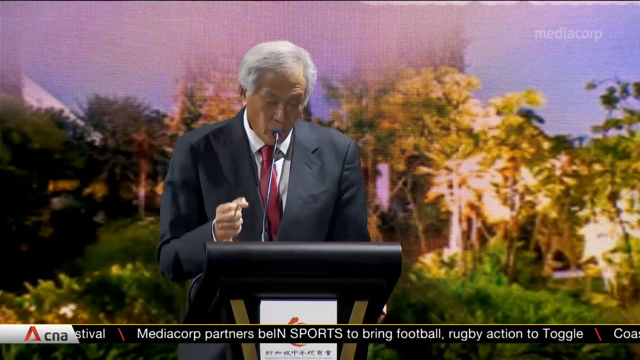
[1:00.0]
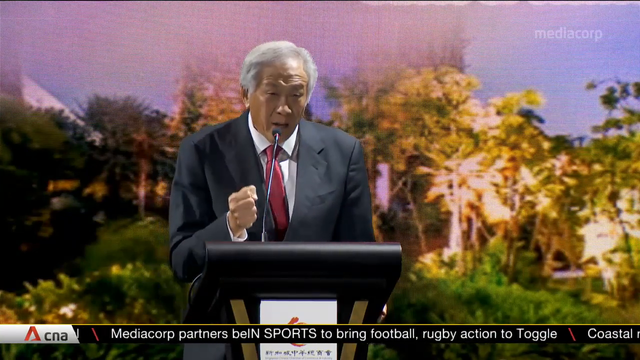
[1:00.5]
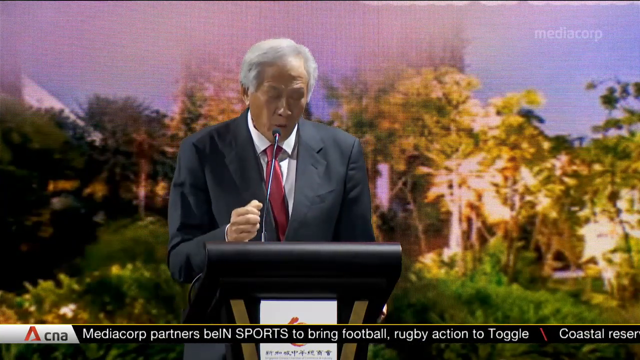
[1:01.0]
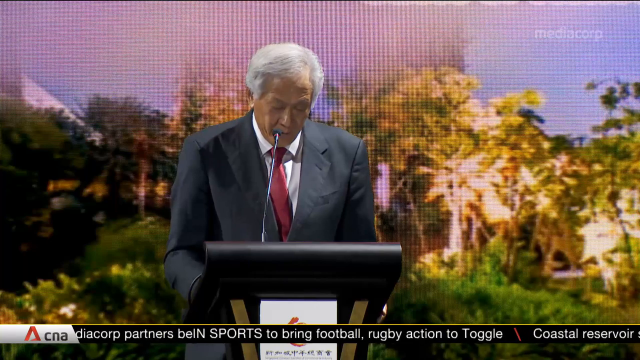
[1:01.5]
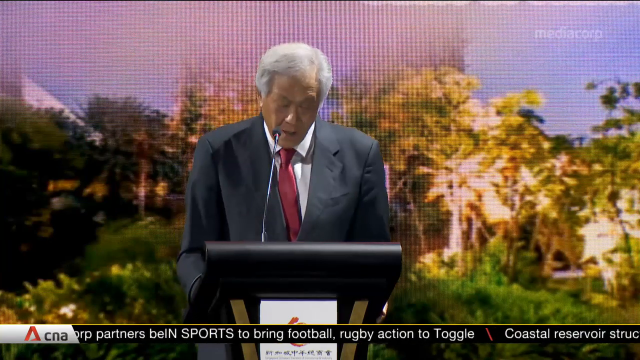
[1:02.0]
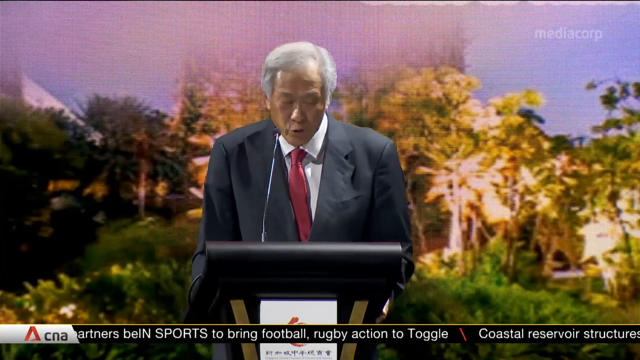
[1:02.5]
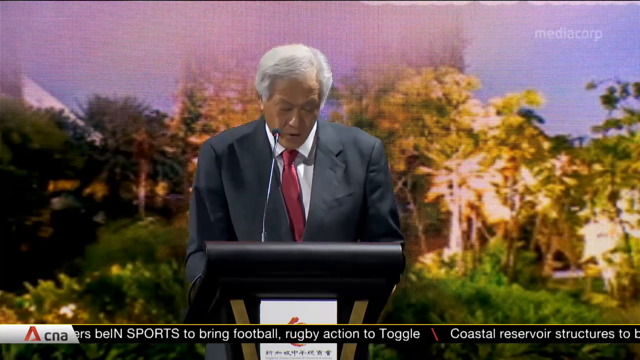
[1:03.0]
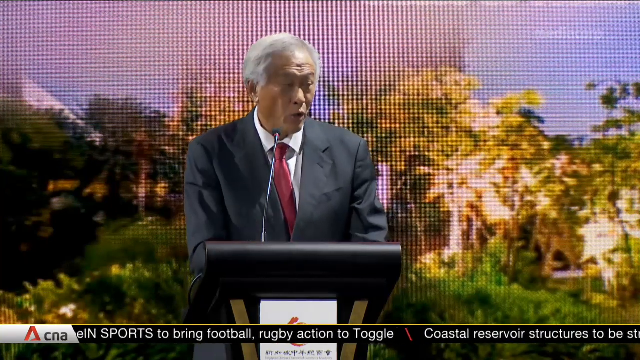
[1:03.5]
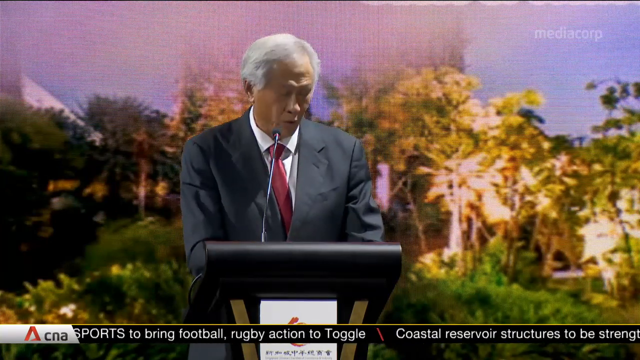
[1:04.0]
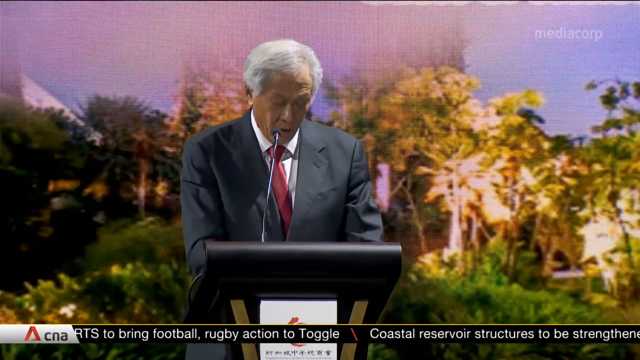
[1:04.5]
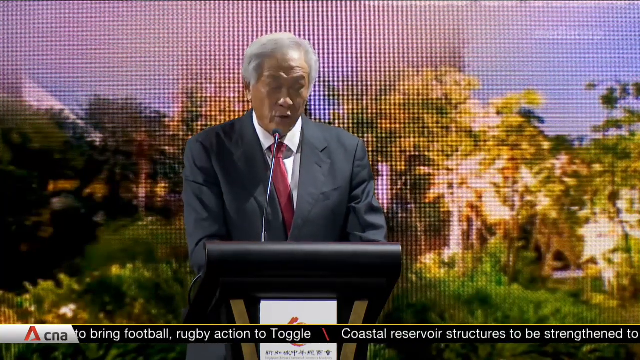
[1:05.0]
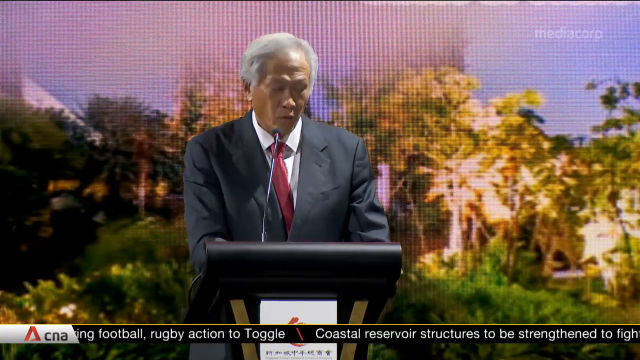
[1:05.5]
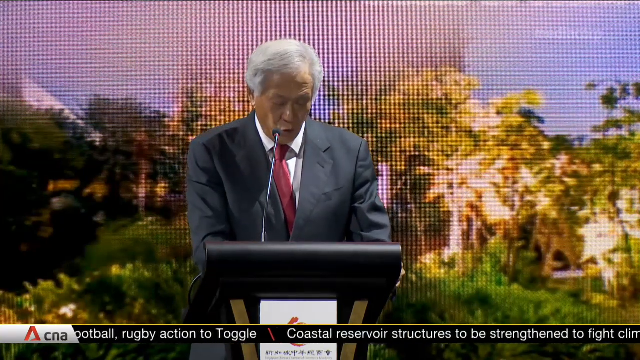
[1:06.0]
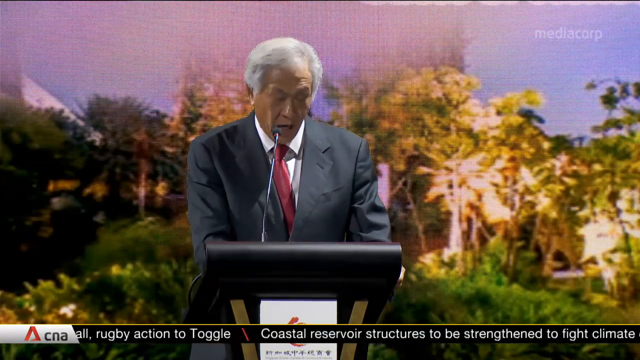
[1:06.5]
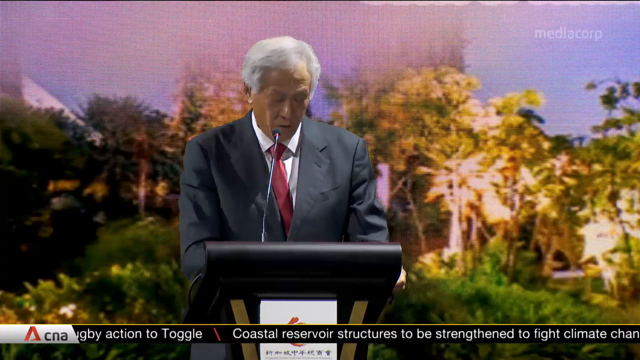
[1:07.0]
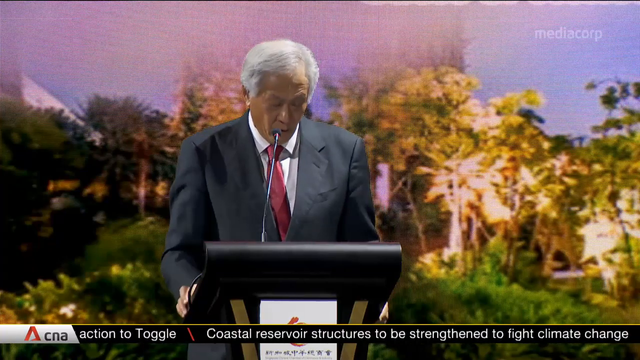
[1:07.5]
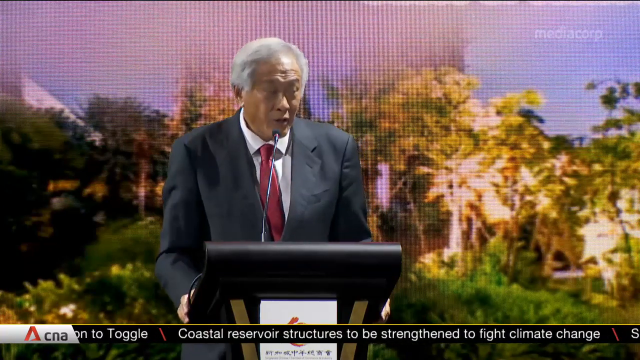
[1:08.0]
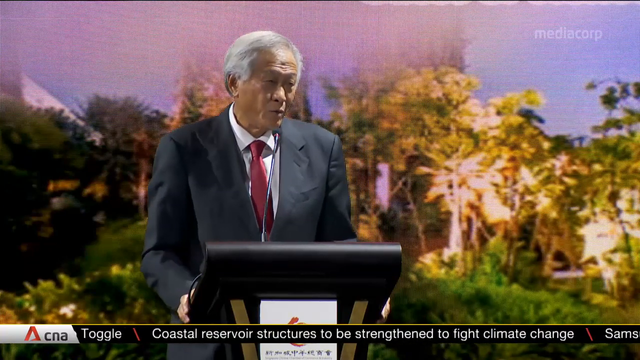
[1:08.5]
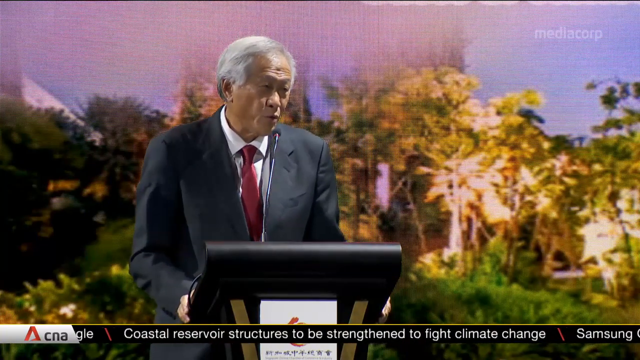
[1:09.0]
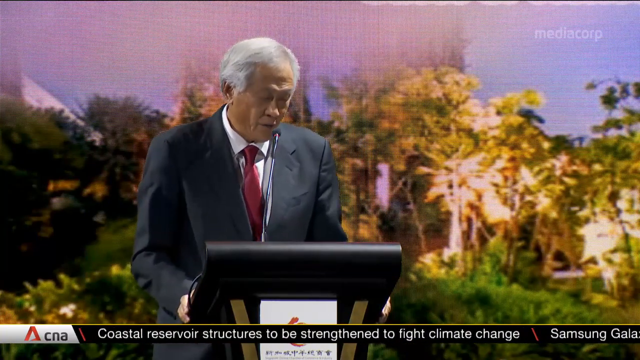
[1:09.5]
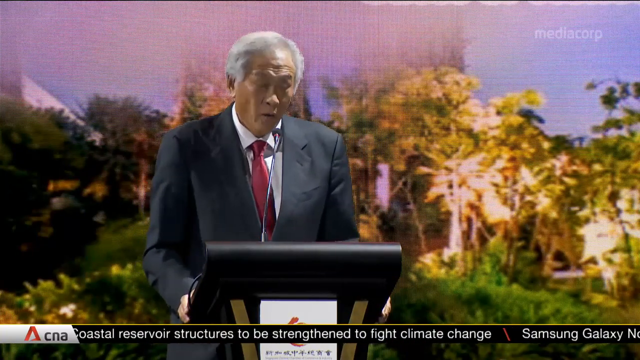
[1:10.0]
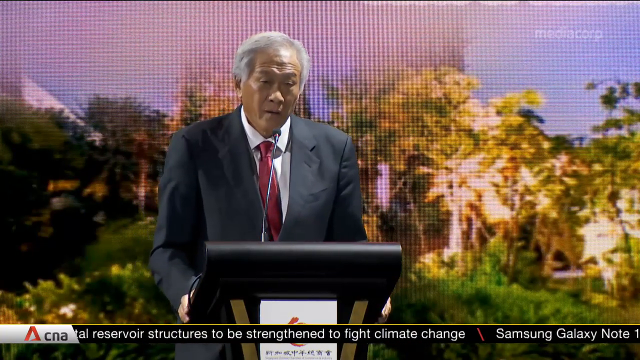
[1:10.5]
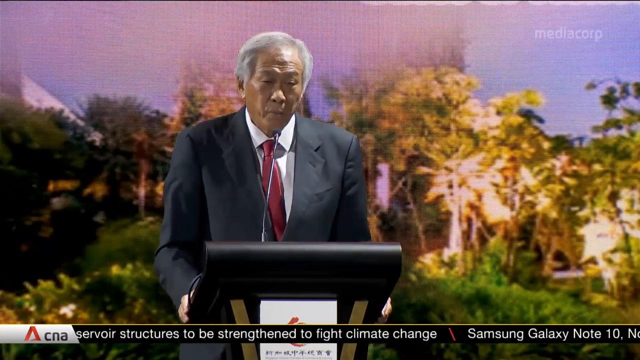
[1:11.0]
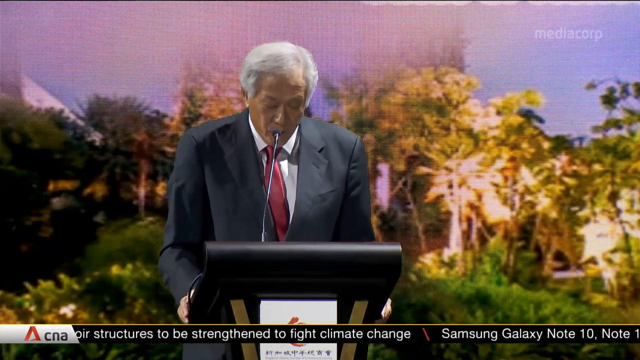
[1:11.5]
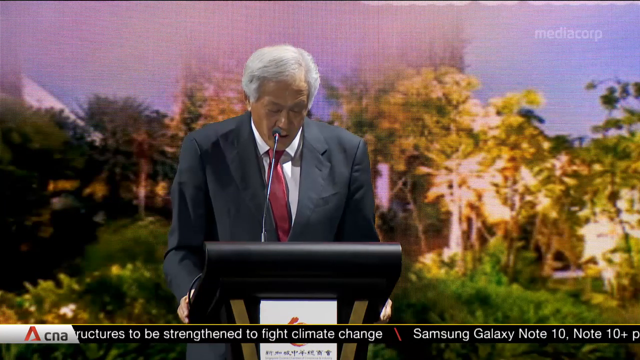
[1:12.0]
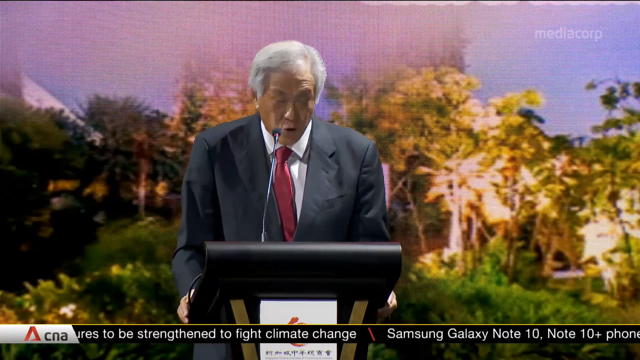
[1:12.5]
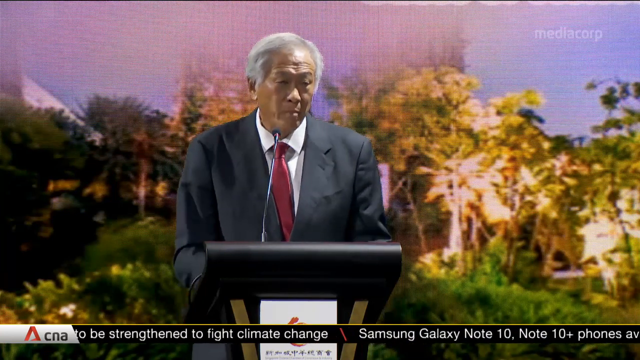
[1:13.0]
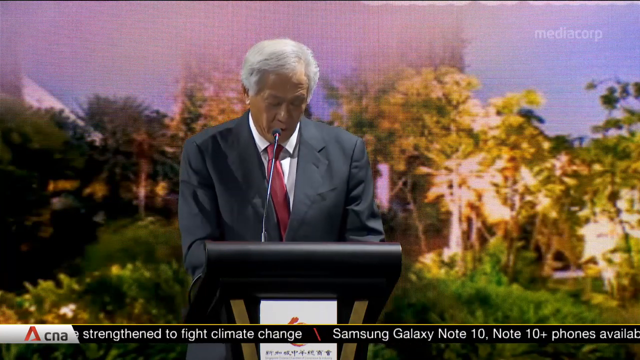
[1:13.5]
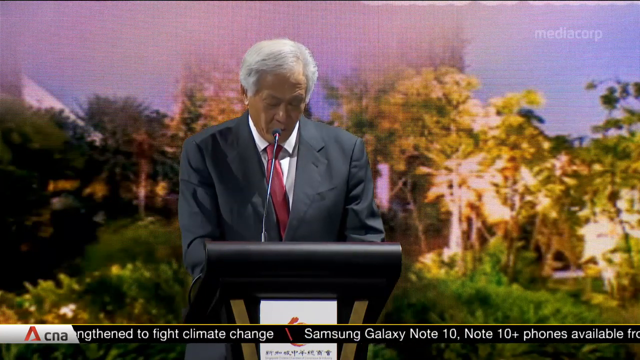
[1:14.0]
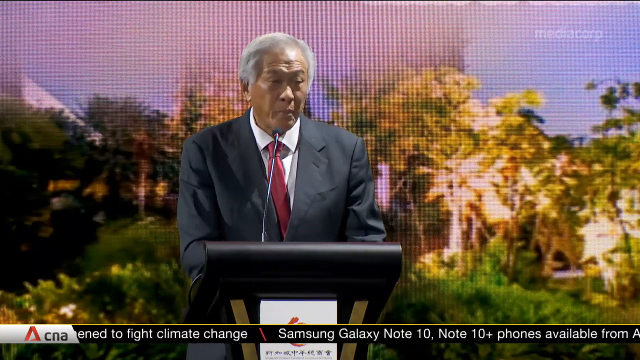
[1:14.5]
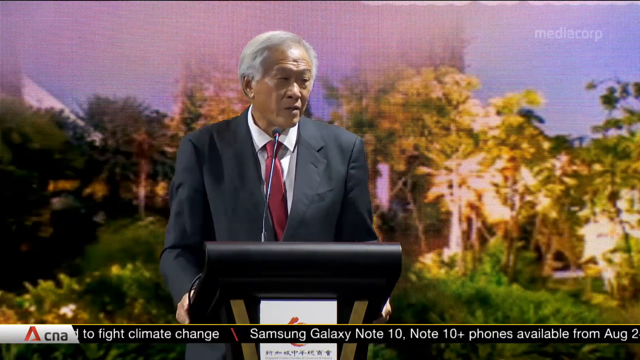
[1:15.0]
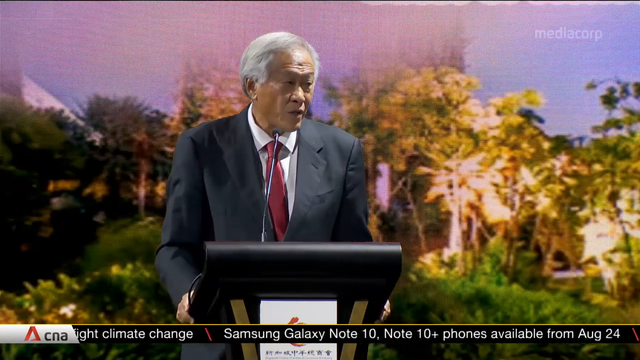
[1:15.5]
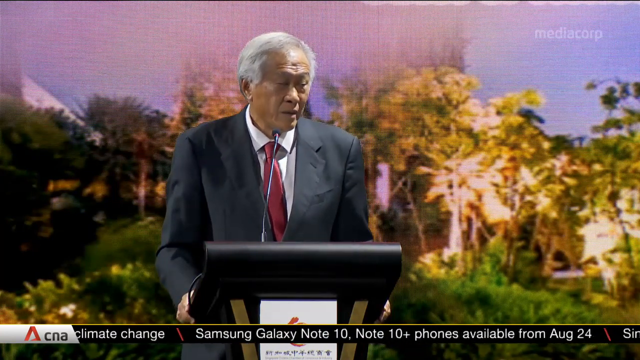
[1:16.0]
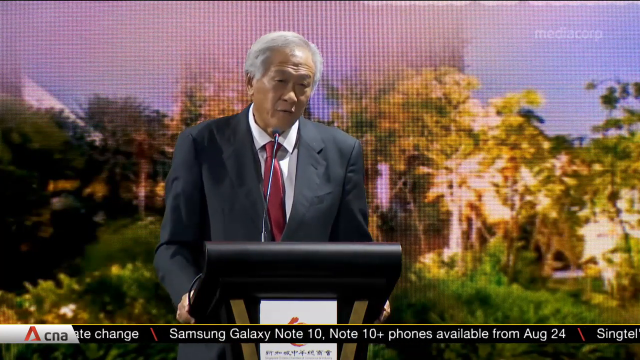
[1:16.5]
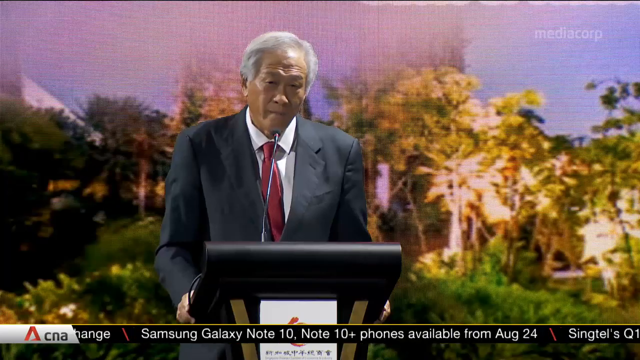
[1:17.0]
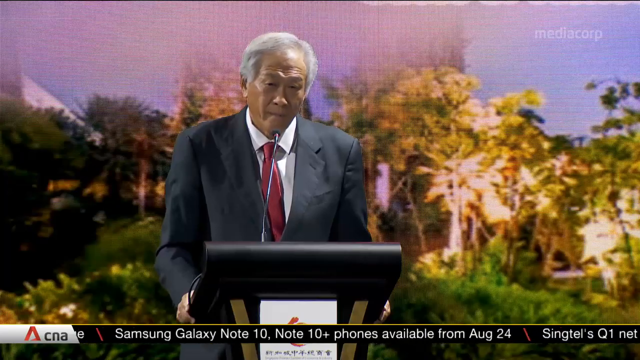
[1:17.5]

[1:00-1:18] Dr. Ng Eng Hen continues speaking very earnestly to the audience, repeatedly raising and lowering his clenched fist. He over-enunciates some of his words and puts his face closer to the microphone. The news ticker keeps running across the bottom of the screen, a black strap with white text in a simple sans-serif font. It reads: "Anthony Chen's latest film, Wet Season, to premiere at Toronto Festival. Mediacorp partners Be In Sports to bring football rugby action to Toggle. Coastal Reservoir Structures to be strengthened to fight climate change. Samsung Galaxy Note 10, Note 10+, phones available from AUG24."